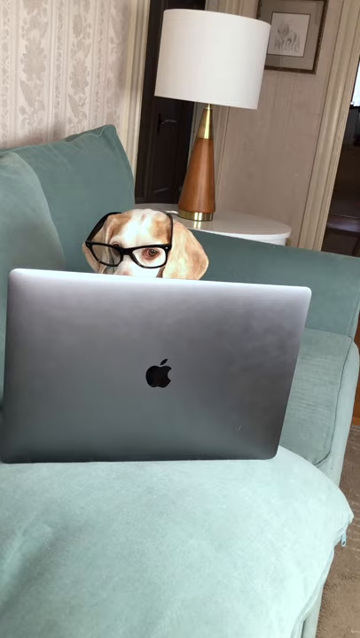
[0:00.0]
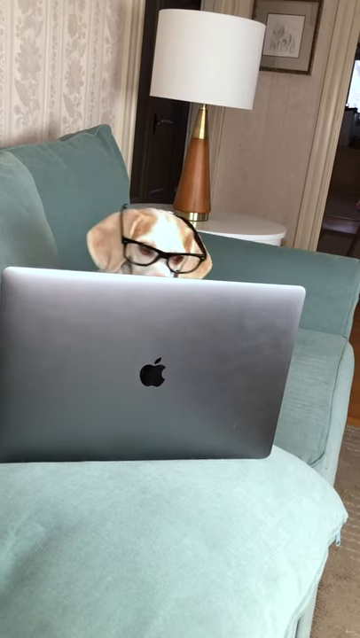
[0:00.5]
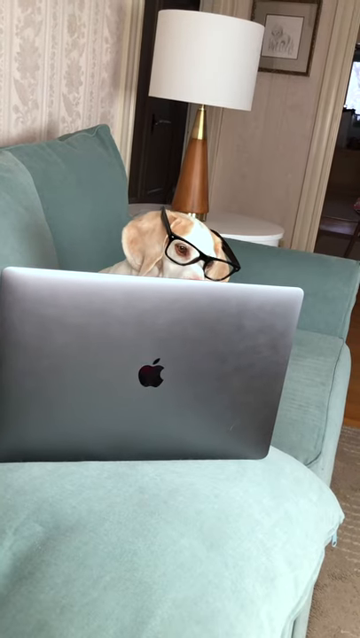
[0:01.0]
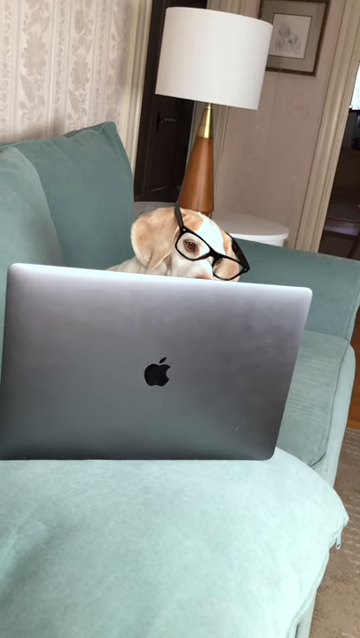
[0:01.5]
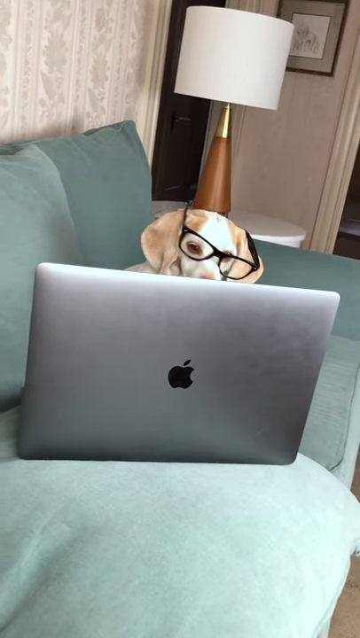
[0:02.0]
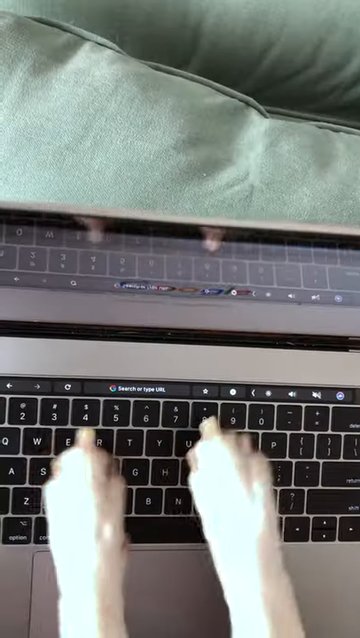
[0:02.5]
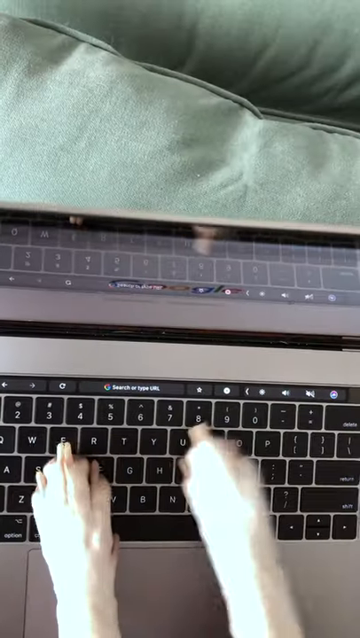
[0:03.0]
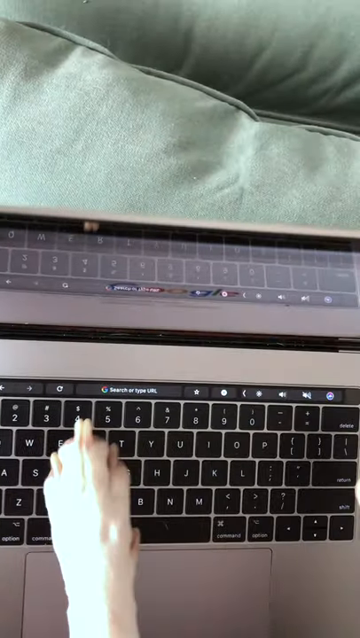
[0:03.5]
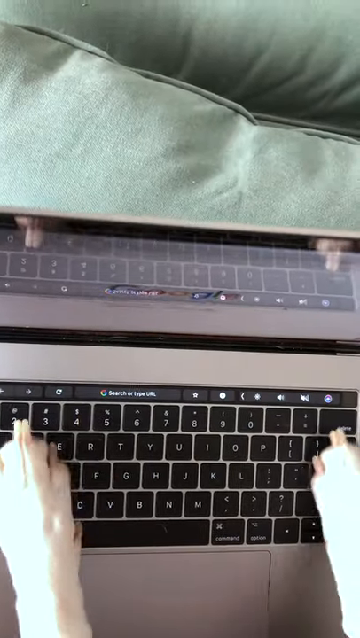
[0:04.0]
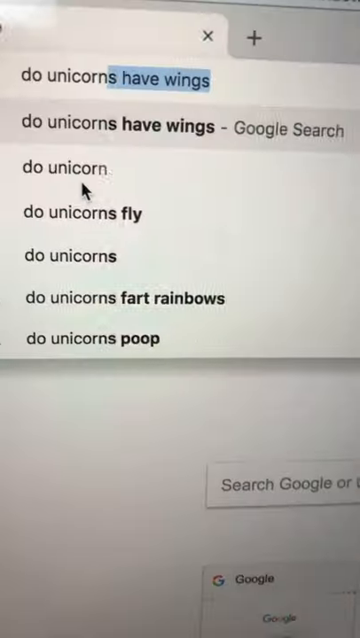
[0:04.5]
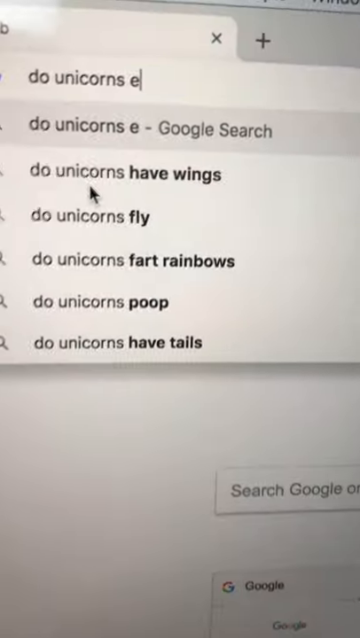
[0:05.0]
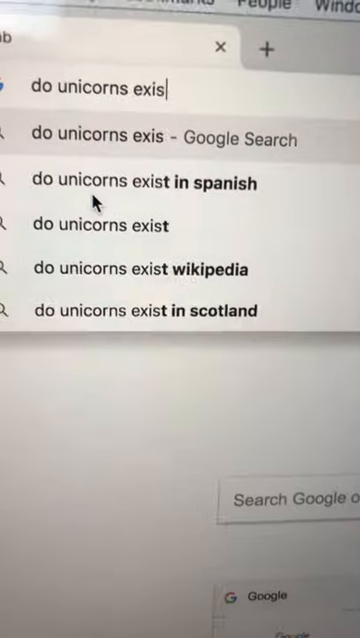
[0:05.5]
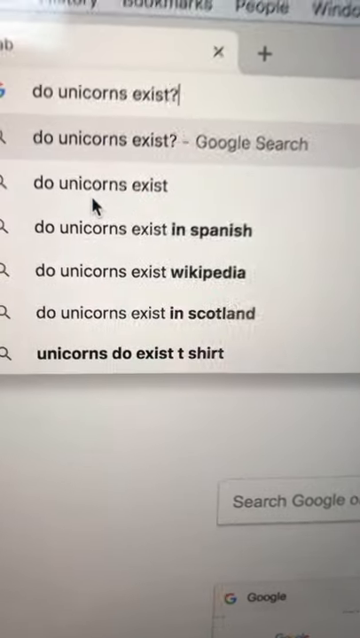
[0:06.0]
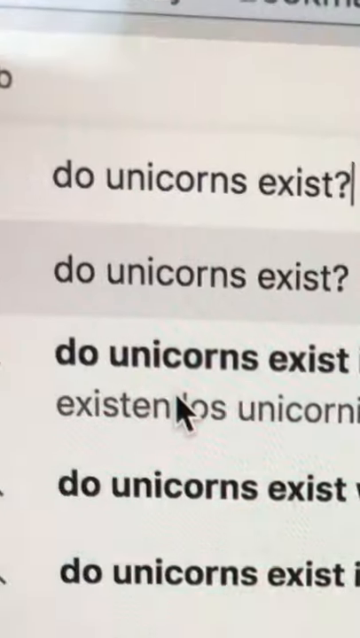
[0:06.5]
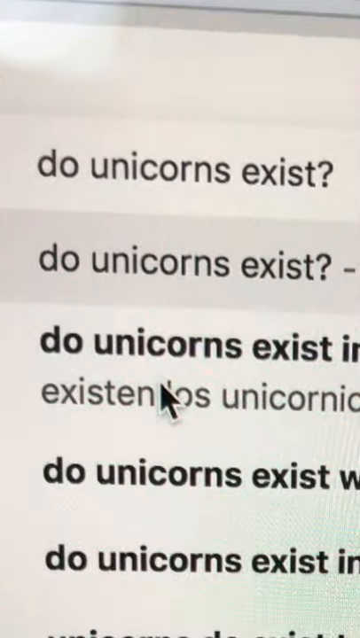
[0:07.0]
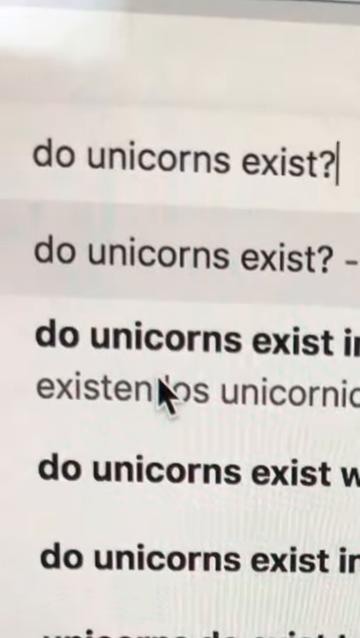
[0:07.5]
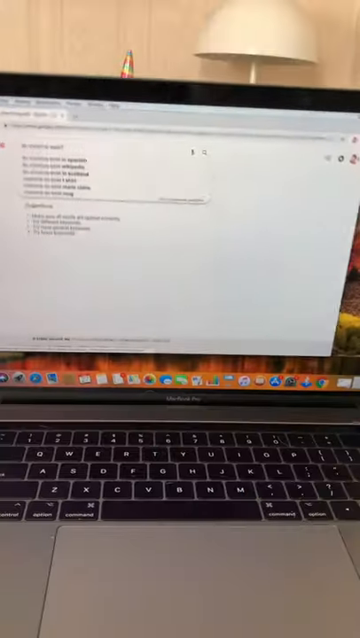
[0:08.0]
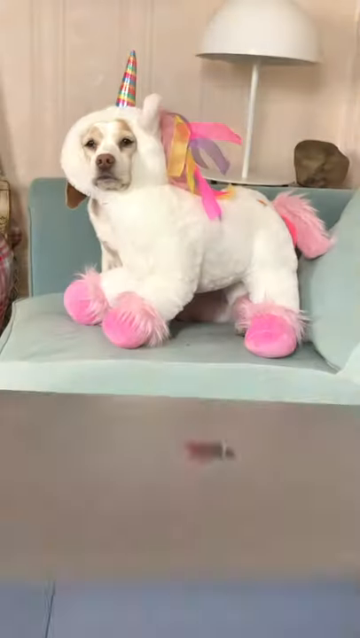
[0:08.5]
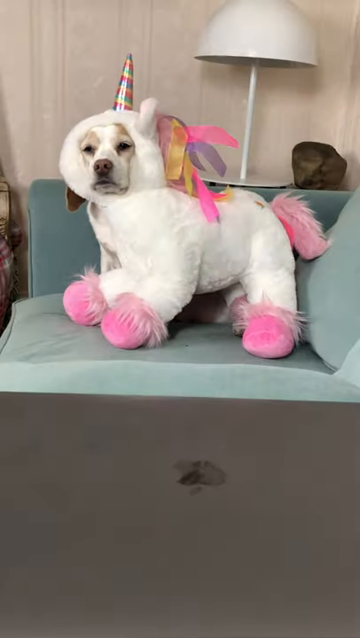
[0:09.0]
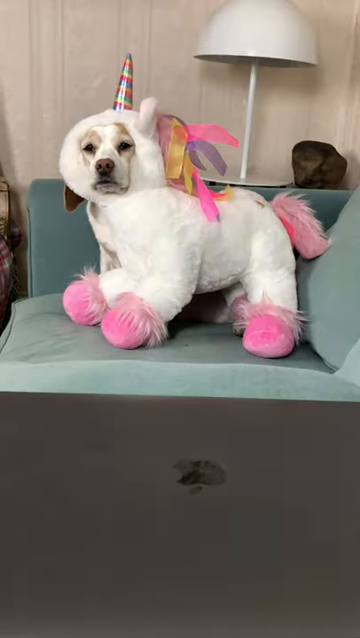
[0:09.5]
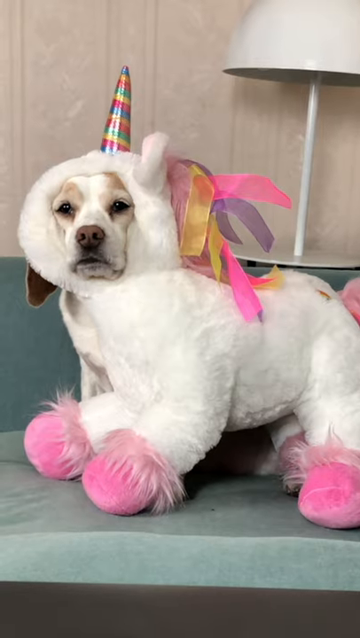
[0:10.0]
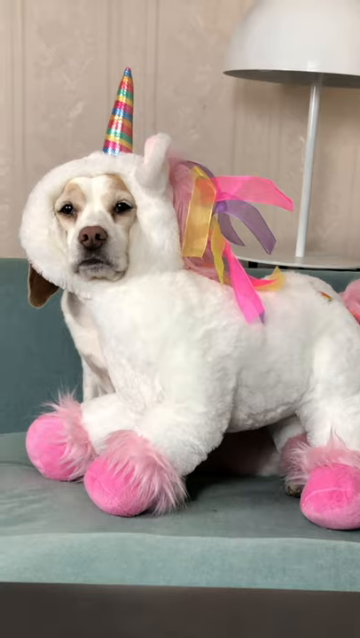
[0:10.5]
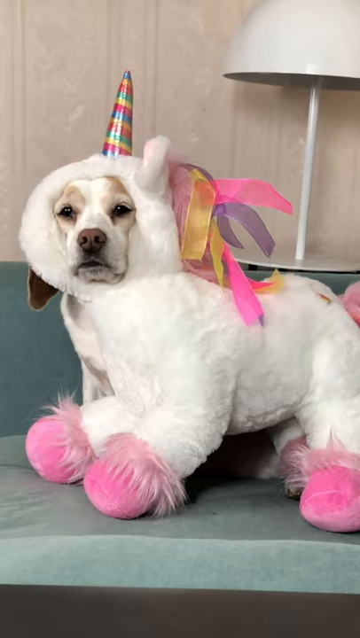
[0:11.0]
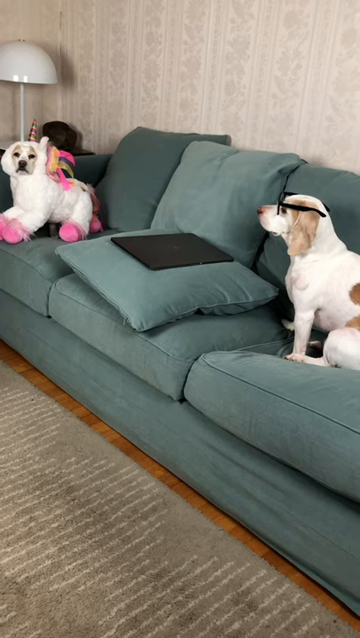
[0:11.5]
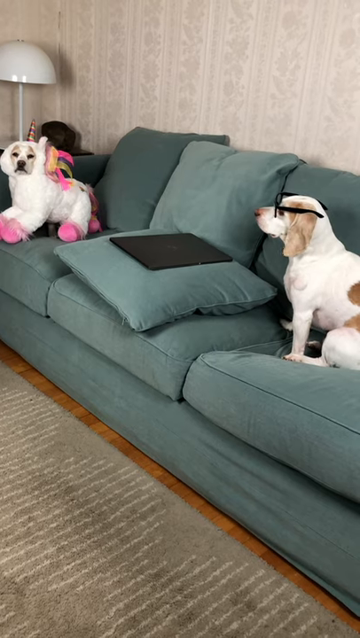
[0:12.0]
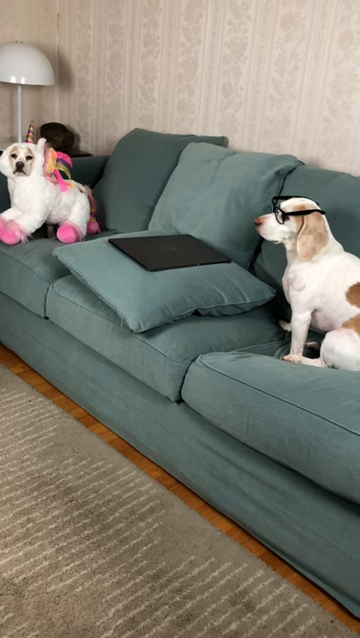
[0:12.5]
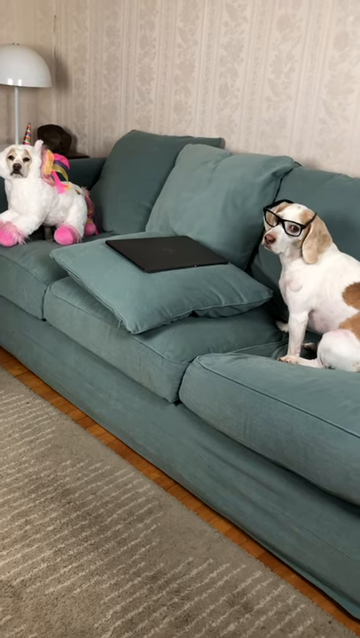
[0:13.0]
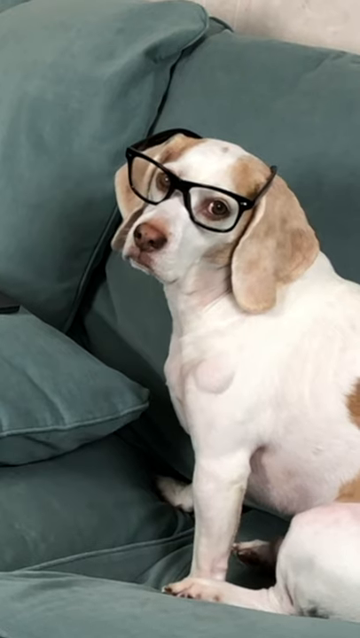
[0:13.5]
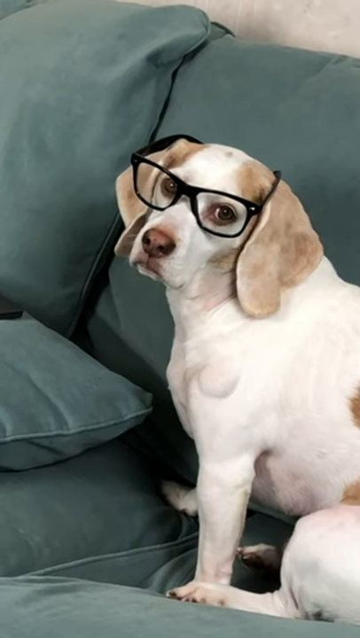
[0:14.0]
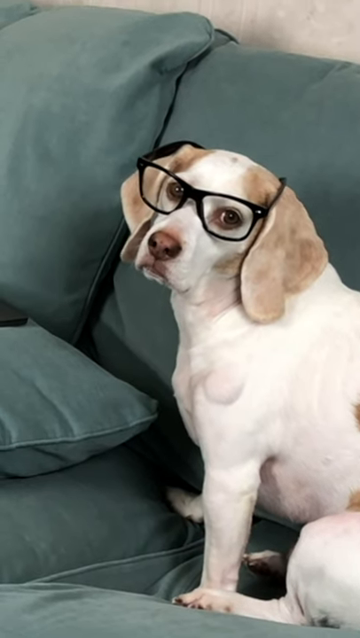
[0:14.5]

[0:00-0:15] A cute video shows two little dogs; it looks like someone created it to make it seem as if a dog is working on a computer. One dog wears glasses and is messing with the computer or laptop, while the other dog is just bored. Something like unicorn pink socks is being worn. The dogs, of unknown breeds, are sitting on a green couch in a house and look like they are having fun. In the background there is a lamp with a round head and a wall that is kind of tan. The computer is an Apple laptop.